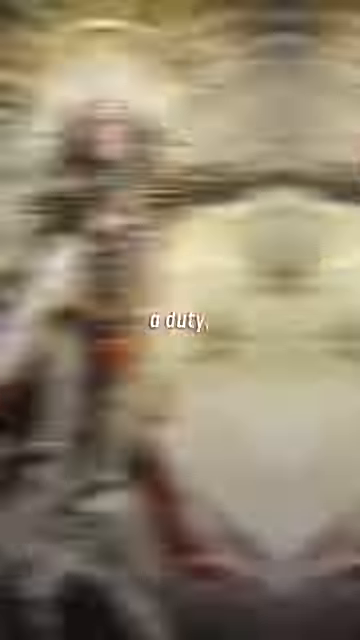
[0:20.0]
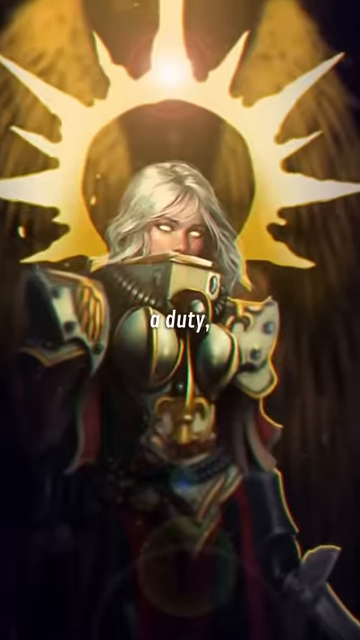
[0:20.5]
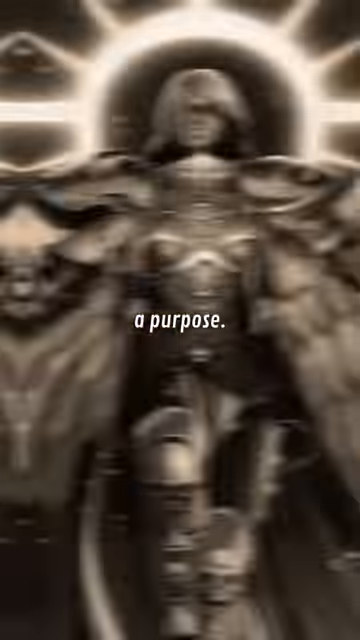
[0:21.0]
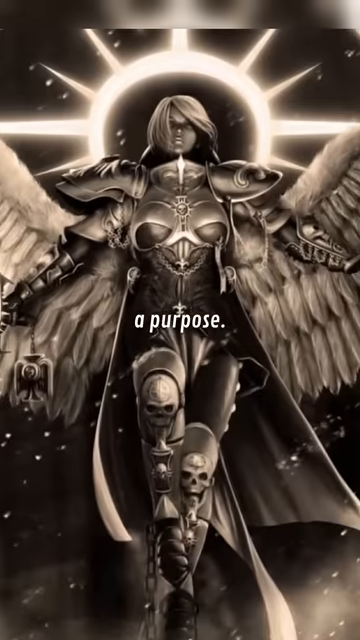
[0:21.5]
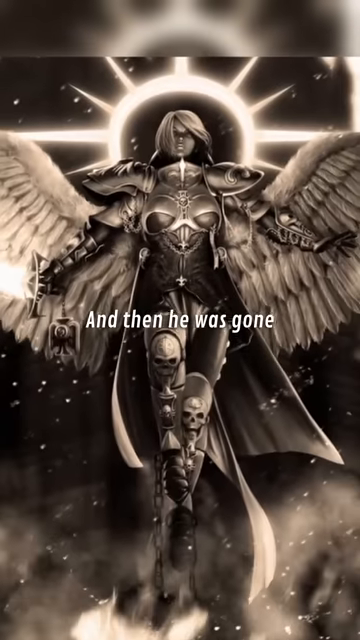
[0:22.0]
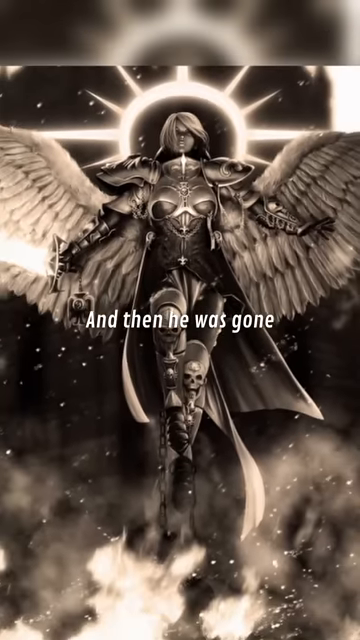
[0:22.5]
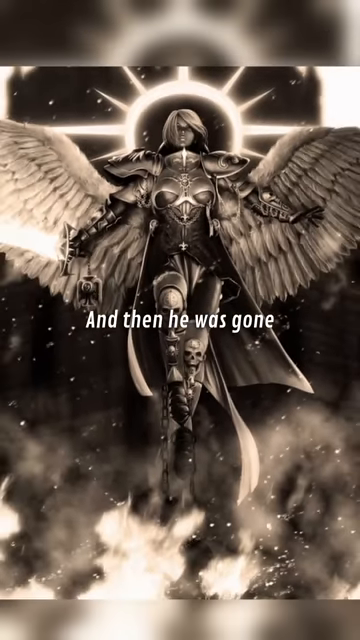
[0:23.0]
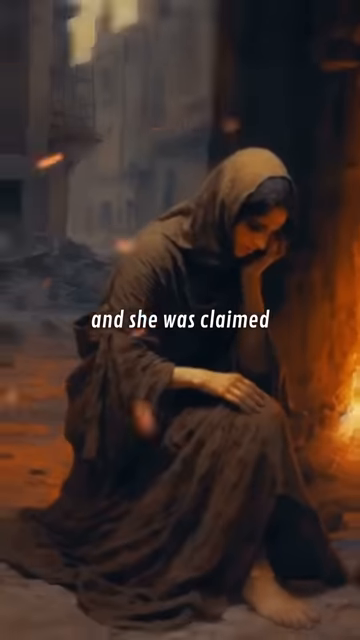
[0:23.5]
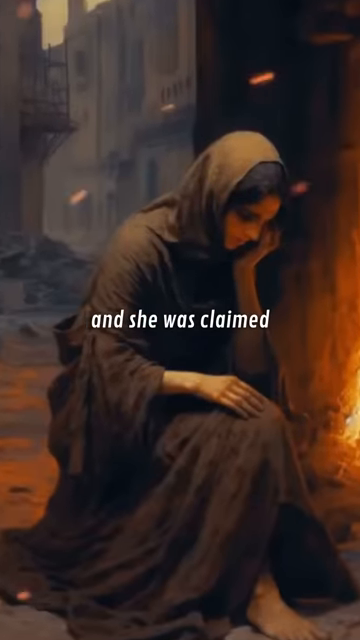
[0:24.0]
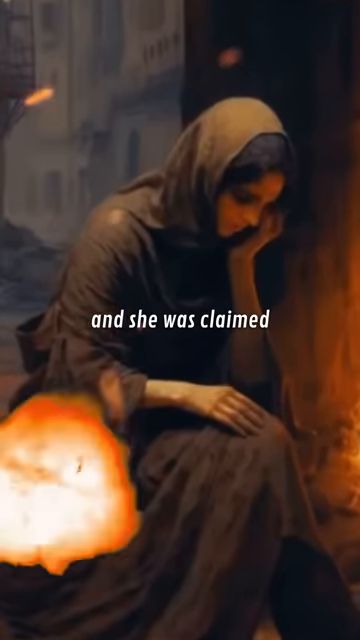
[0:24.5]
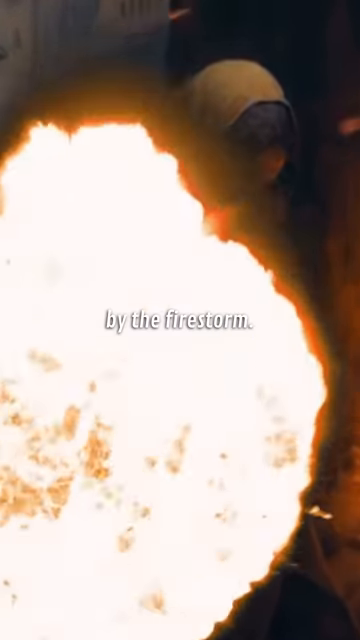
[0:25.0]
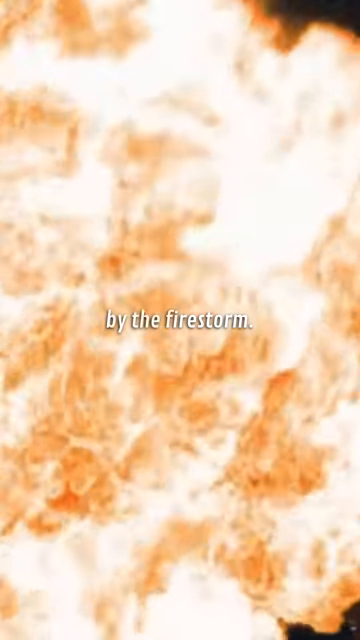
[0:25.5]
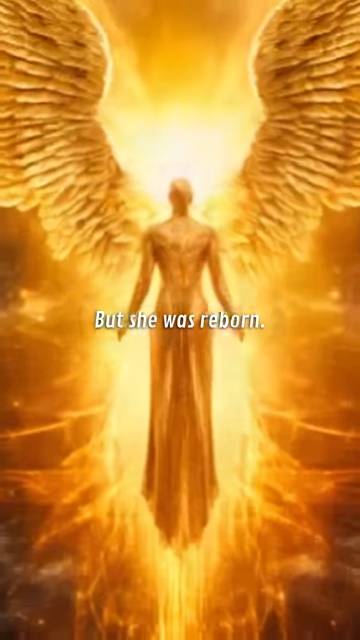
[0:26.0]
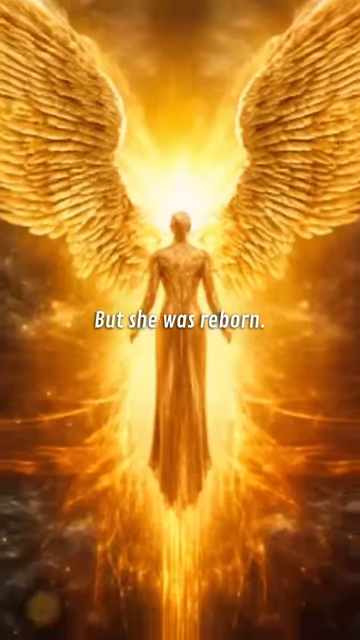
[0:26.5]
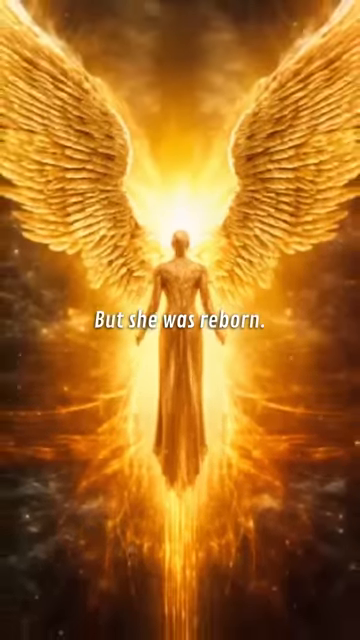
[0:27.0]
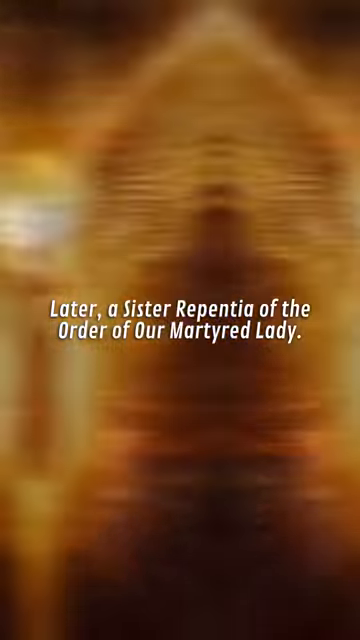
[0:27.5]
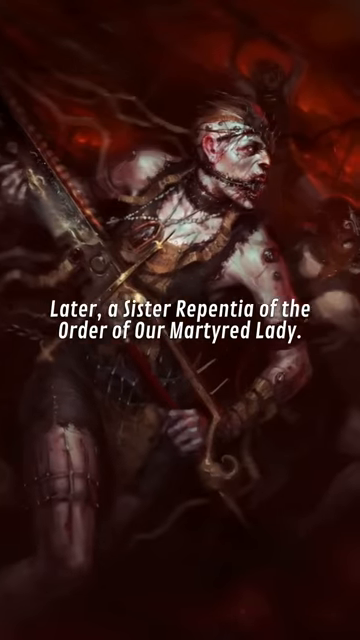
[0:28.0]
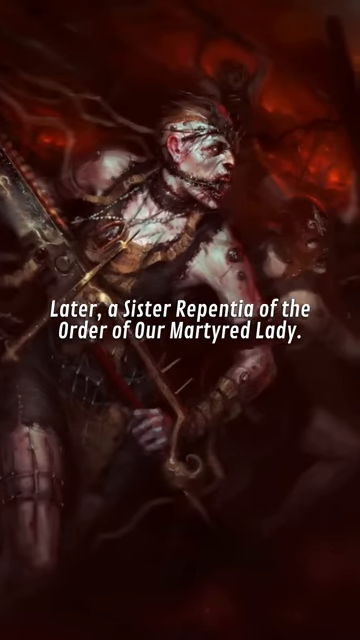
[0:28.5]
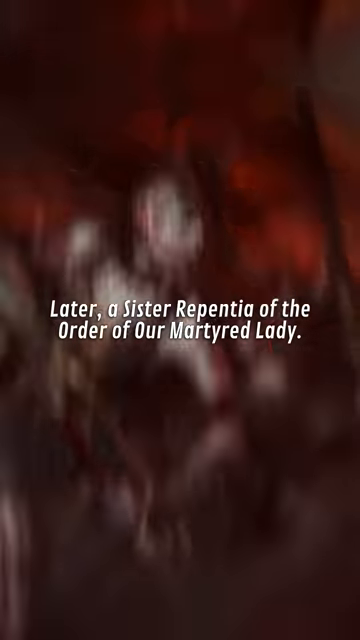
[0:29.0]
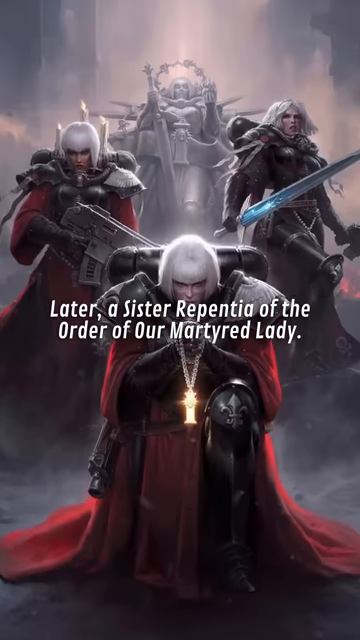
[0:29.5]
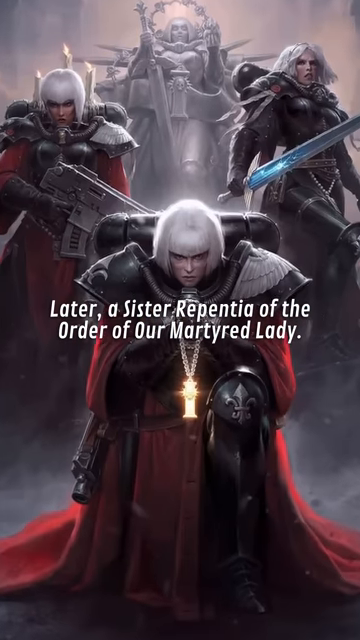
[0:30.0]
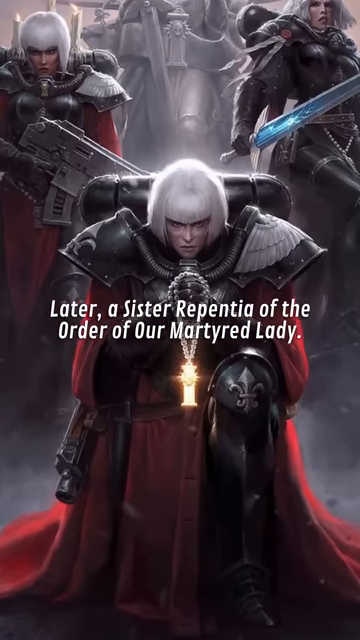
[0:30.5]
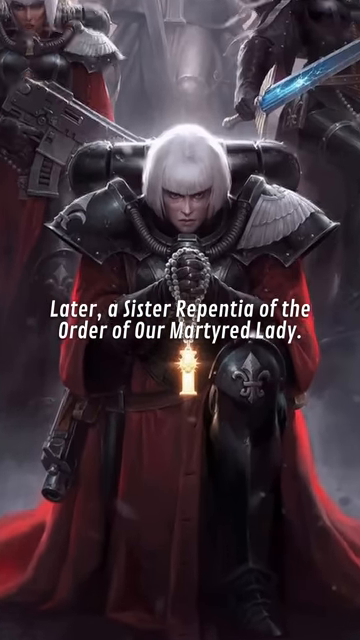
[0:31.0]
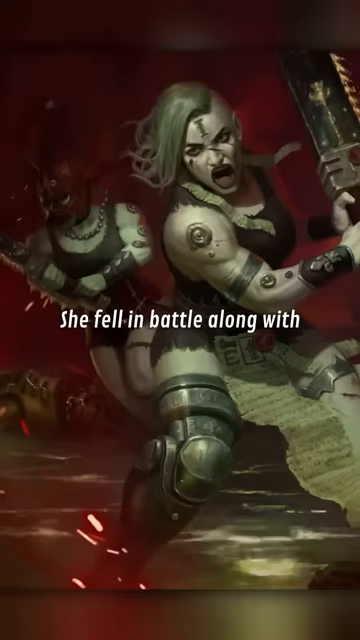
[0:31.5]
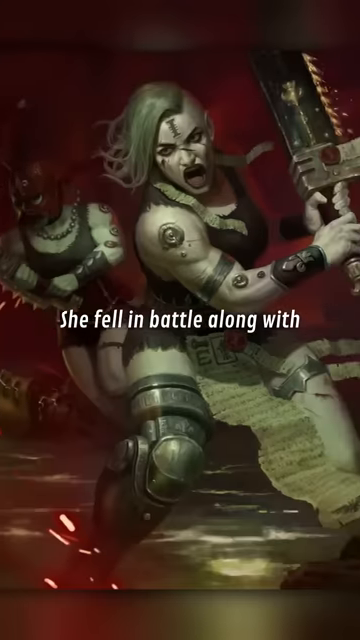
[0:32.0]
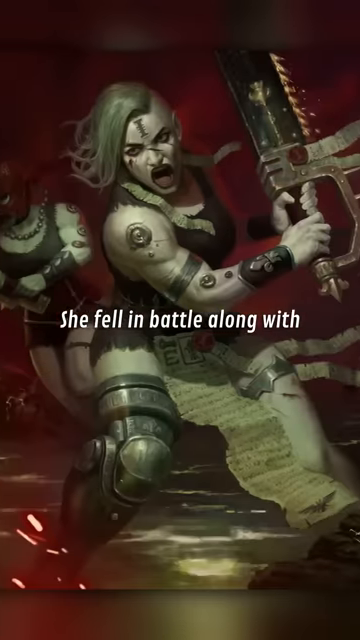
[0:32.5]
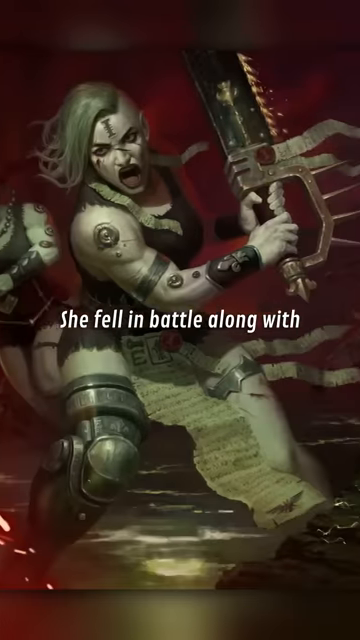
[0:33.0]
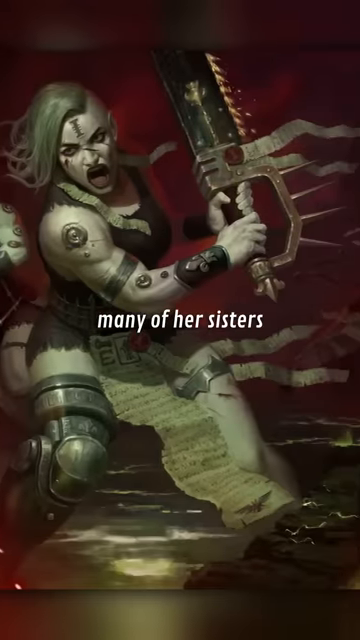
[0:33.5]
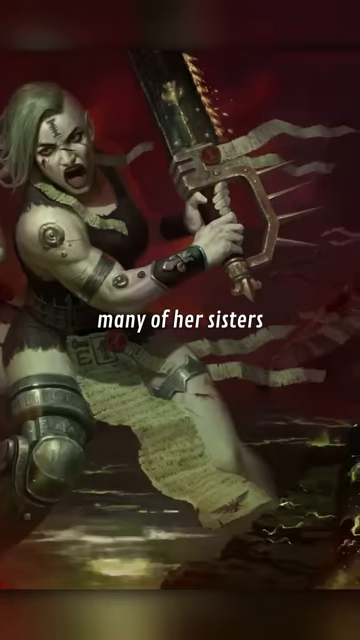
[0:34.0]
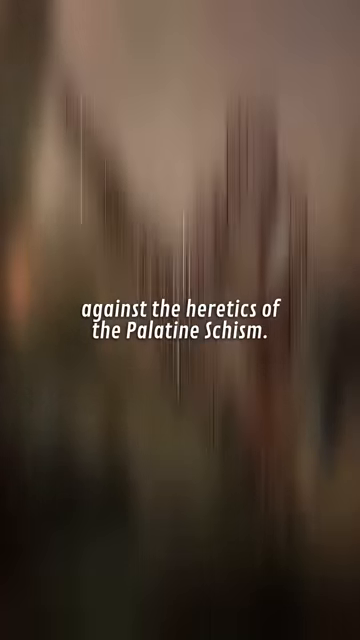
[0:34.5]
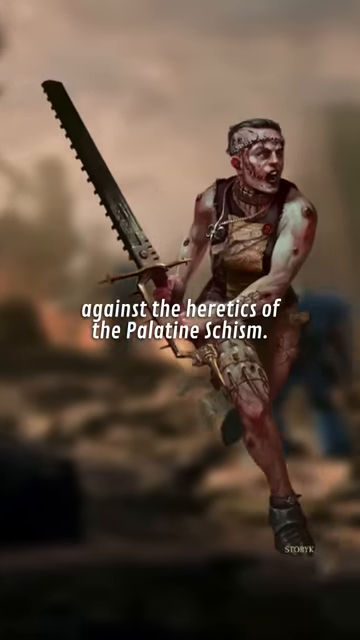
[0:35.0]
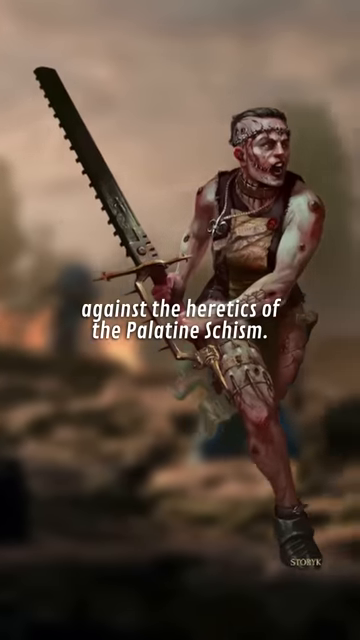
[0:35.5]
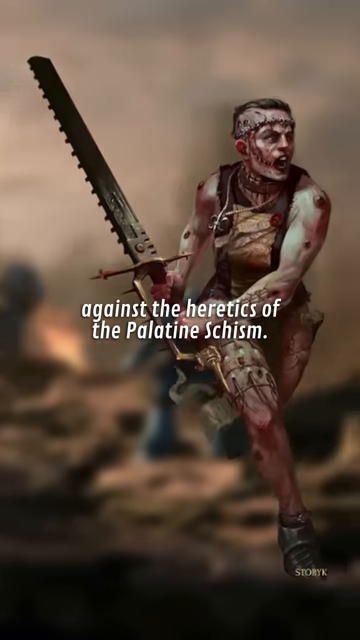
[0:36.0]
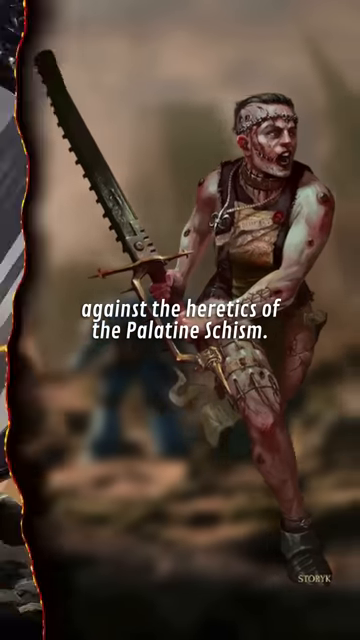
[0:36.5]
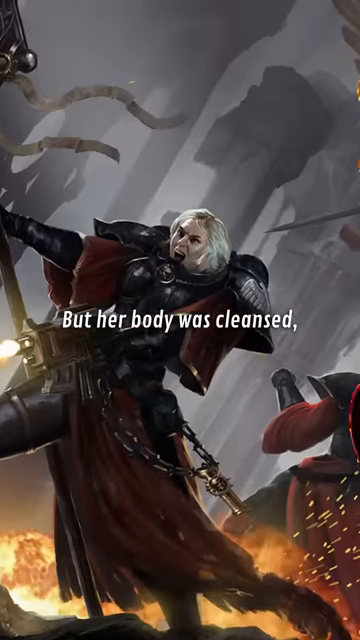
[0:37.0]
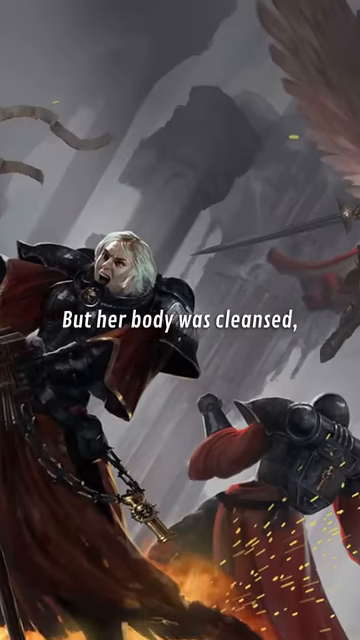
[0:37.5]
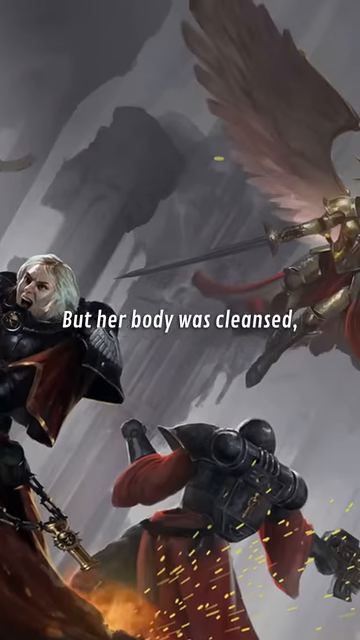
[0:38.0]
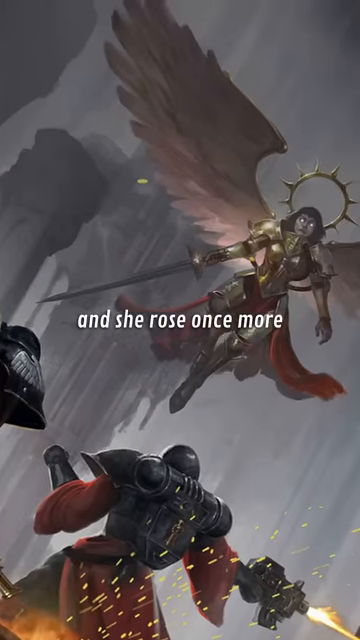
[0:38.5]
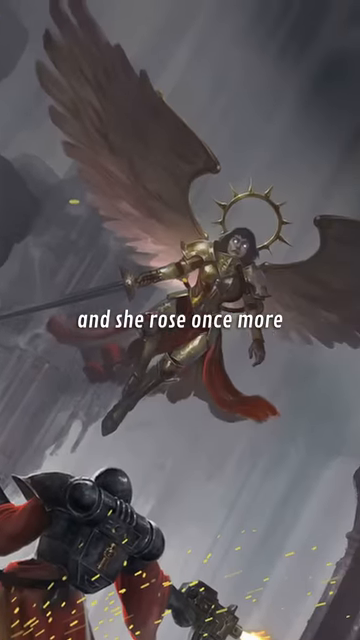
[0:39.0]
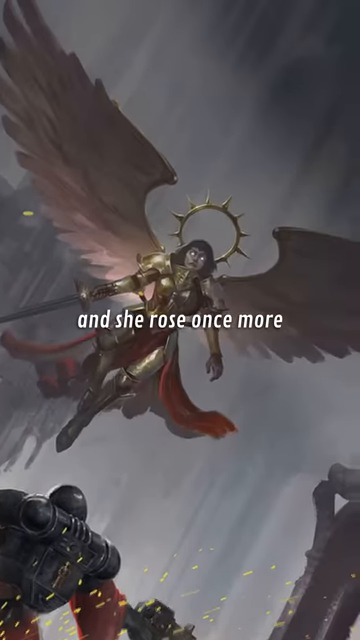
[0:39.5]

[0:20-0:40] Several other characters appear. One individual appears to be all in gray, with what appears to be a halo effect above their head, two long feathery white wings, and knee pads made out of skulls. Their armor plates appear to be those of a beetle, and toward the center there is a face almost like an animal or a bug. As the view zooms out, the individuals are seen flying. The image is black and white overall, with what appears to be some gray in it. Next, what appears to be a woman is near a fire. She appears to be wearing a long brownish robe that also covers her head, and she has black hair and tan skin. White text appears. An explosion of fire covers her, and she is reborn. Then an individual in a long dress with long, big white wings appears, with what appears to be the sun in the background.